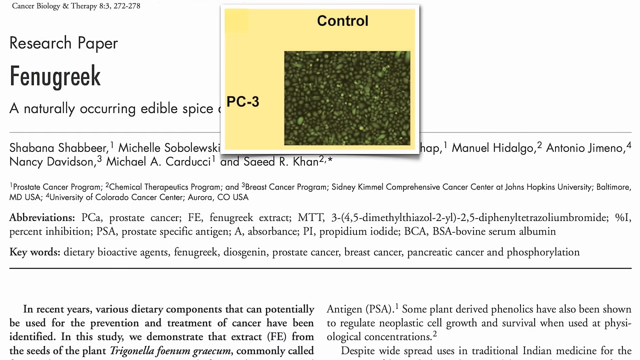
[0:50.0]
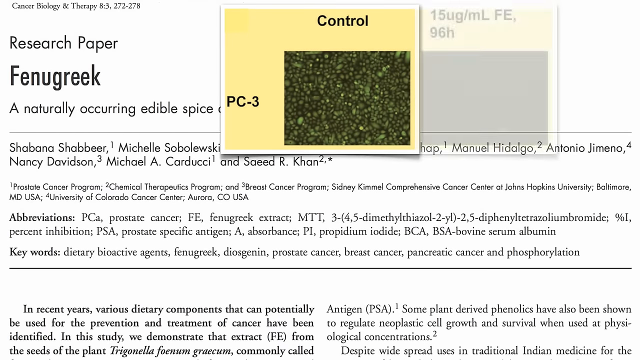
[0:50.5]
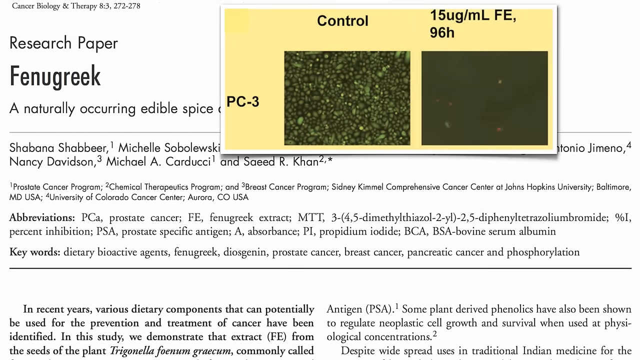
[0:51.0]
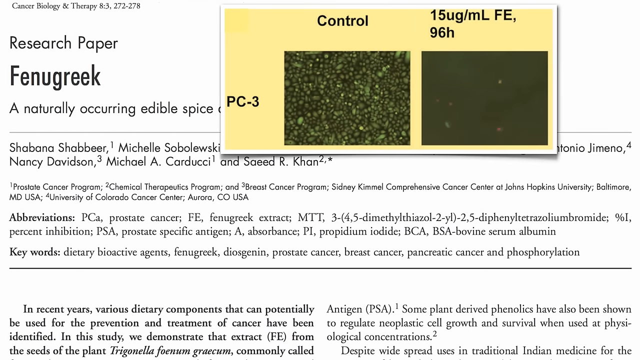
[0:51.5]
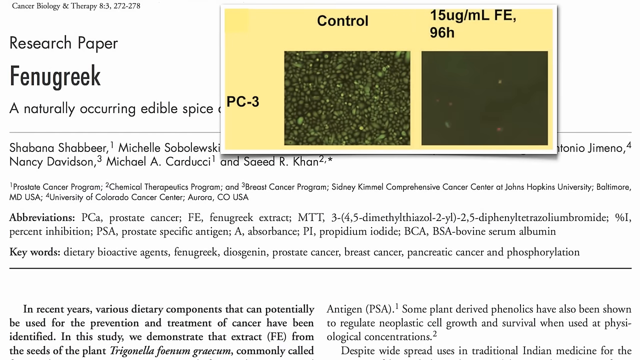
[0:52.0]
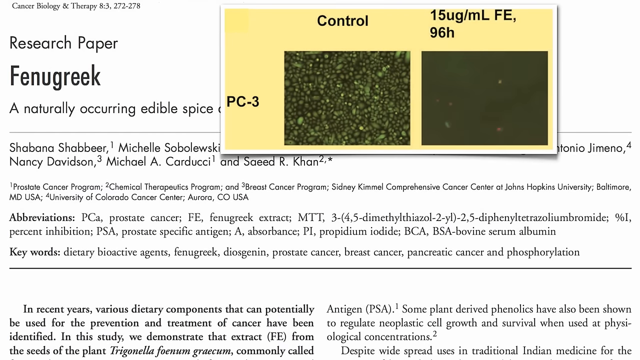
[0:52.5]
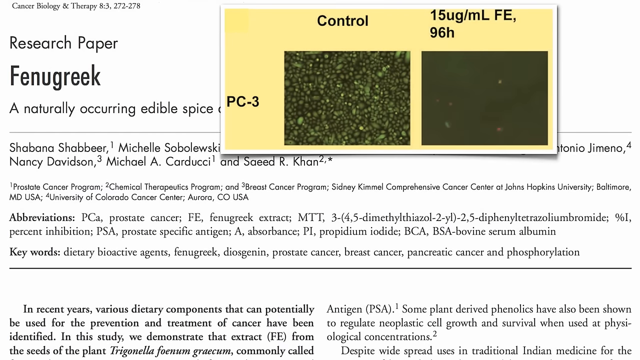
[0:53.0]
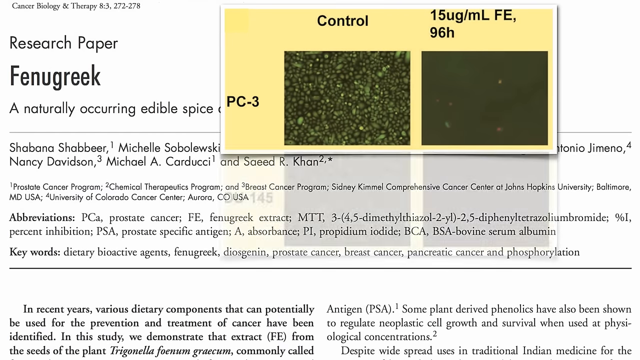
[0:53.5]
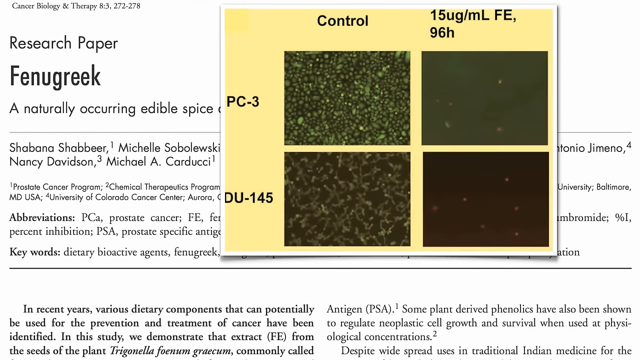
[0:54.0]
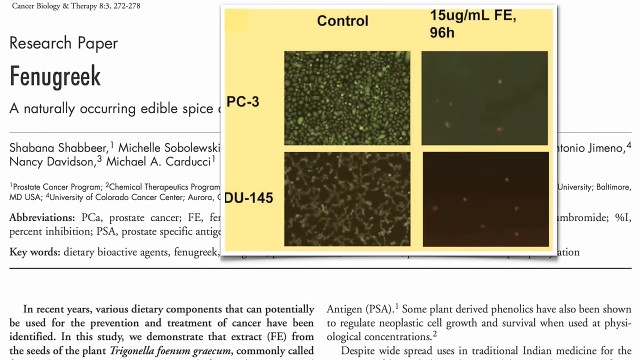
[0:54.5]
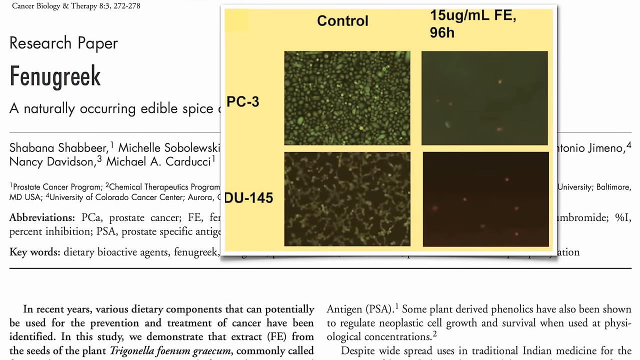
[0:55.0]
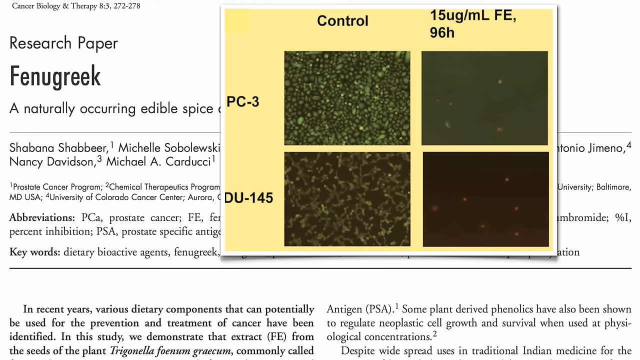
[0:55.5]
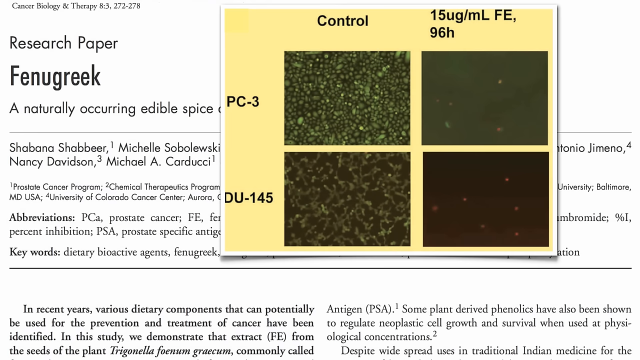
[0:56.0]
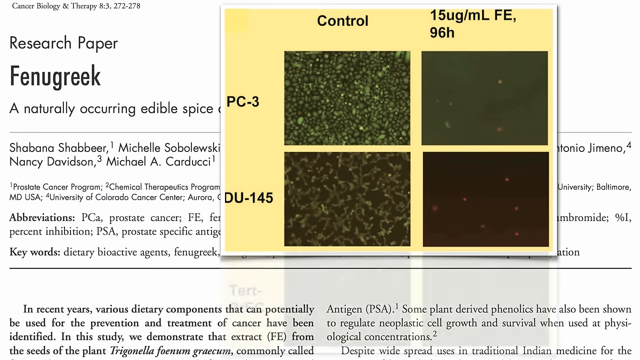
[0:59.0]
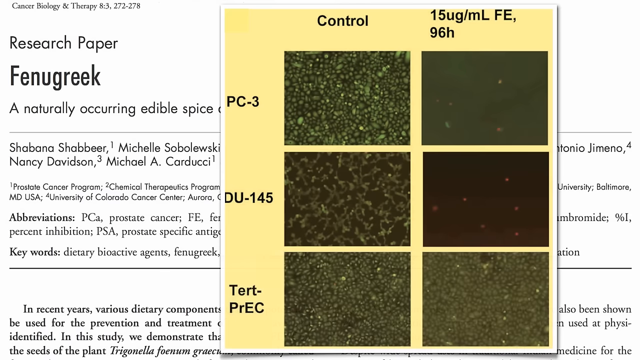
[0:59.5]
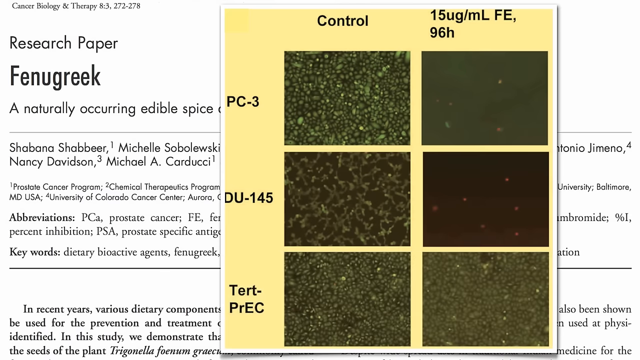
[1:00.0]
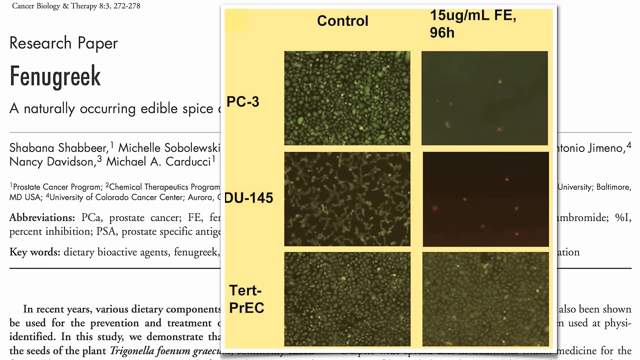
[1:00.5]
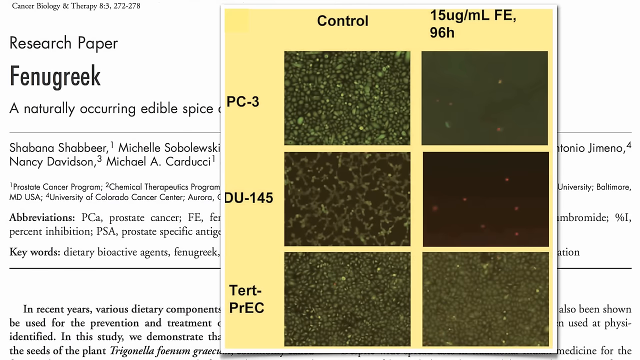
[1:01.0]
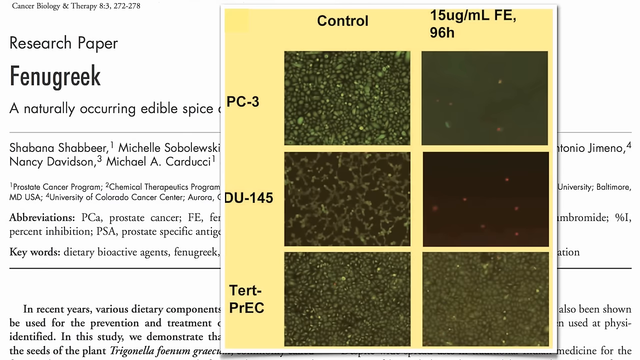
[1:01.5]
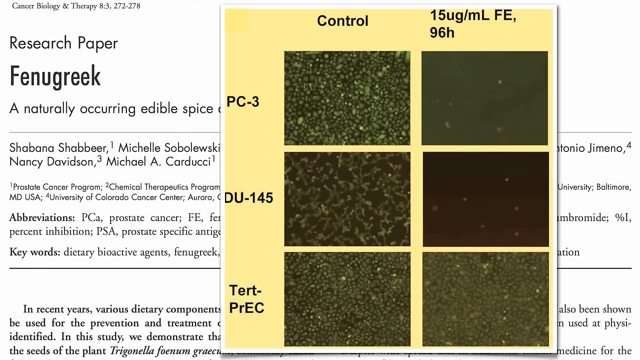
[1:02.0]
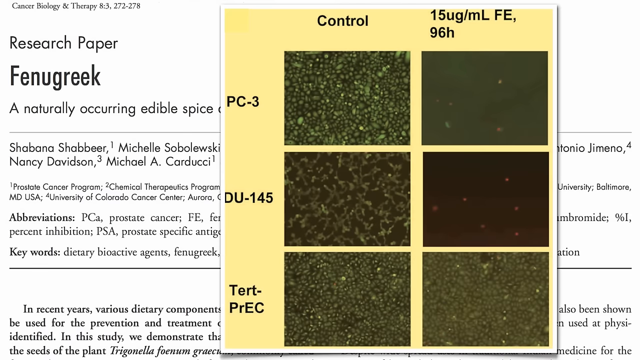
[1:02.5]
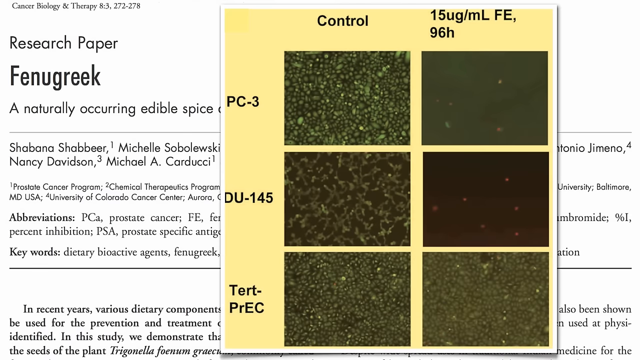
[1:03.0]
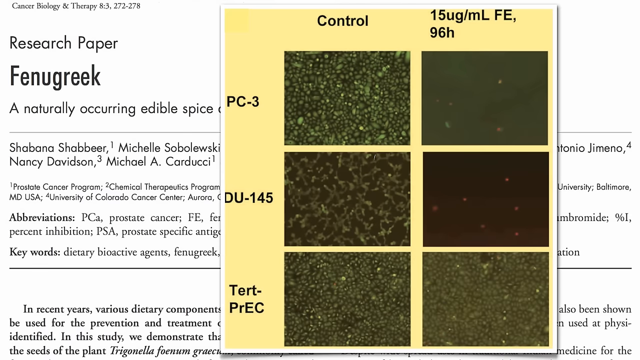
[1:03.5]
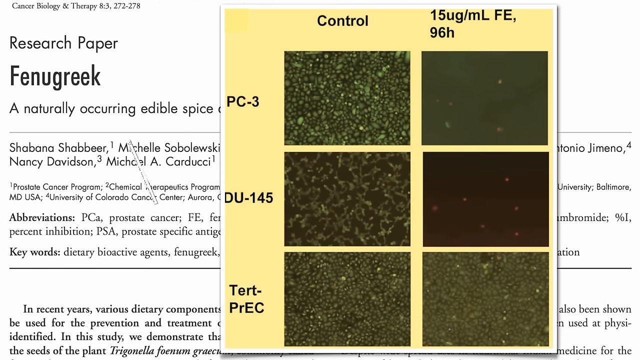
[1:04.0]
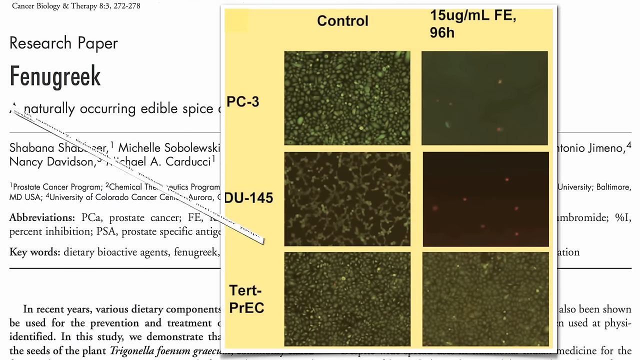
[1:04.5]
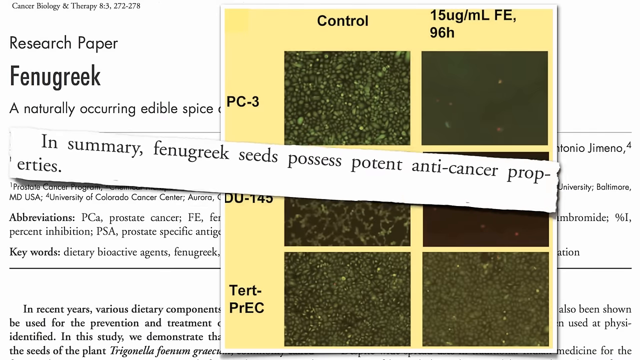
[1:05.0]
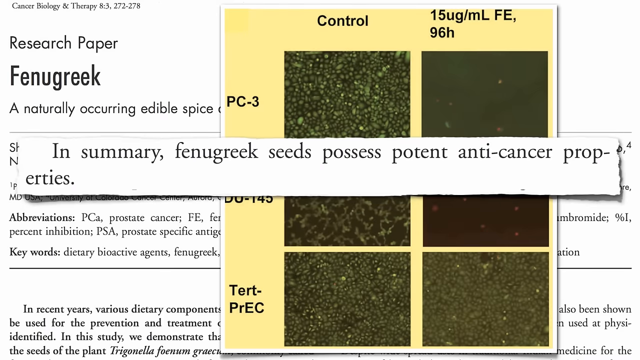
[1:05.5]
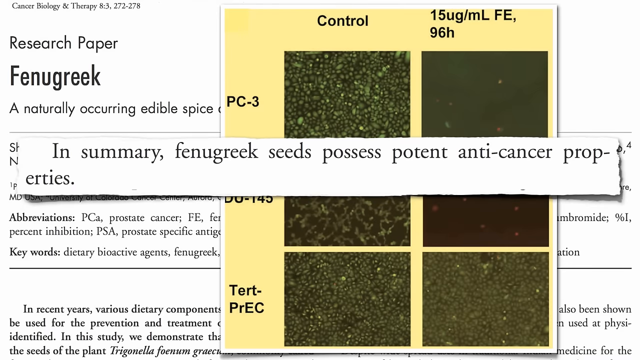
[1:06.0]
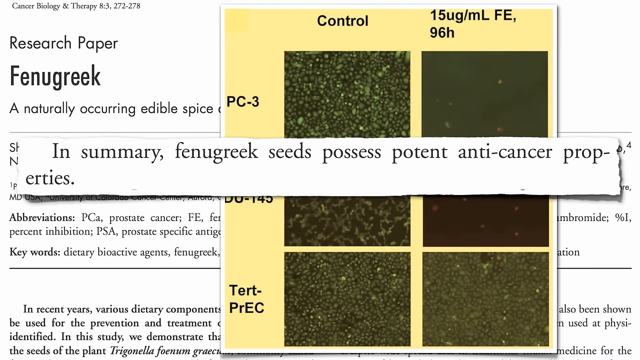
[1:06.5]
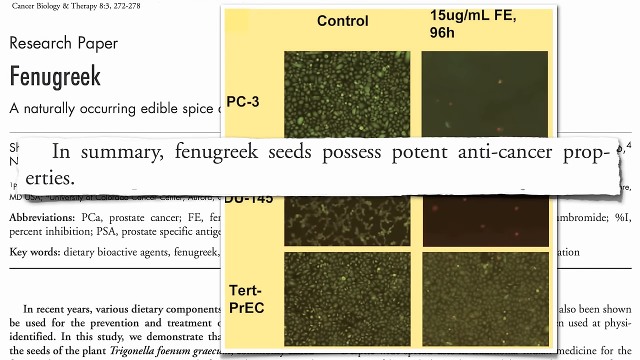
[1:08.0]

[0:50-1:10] Another yellow box appears to the right of the first one, containing a gray picture with just a couple of points of light; on top of it is the text "15 ug/ml fe, 96 h." Two more pictures appear below, forming a two-by-two grid on the yellow background on top of the research paper. The legend on the bottom left reads "du/145." Of the two new pictures, one has a reddish background with many different colored things in the foreground, and the other looks like the one above it except that its background is red rather than green. Two more pictures then appear below, making a grid two across and three down on the yellow background, with the legend for the new row on the left reading "tert/PrEC." A rotating white object then brings up a quote: "in summary fenugreek seeds possess potent anti-cancer properties."